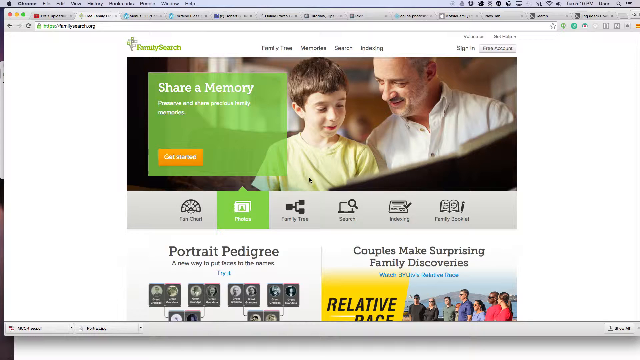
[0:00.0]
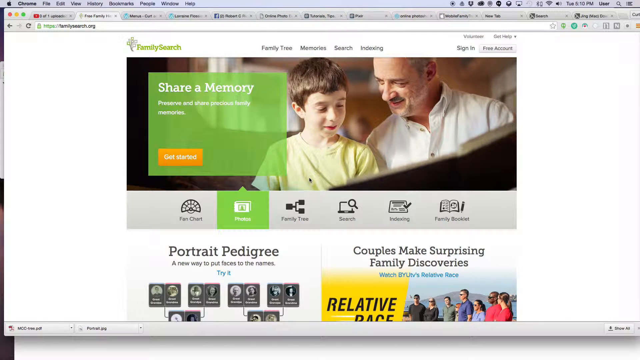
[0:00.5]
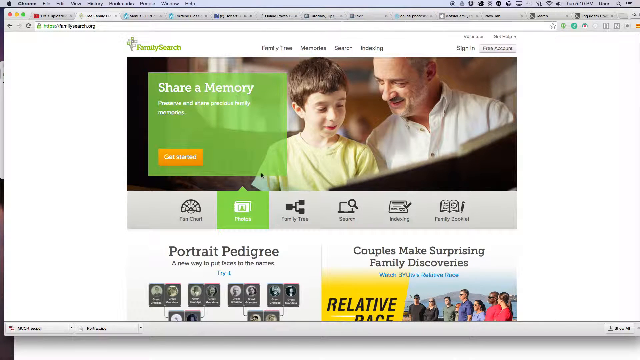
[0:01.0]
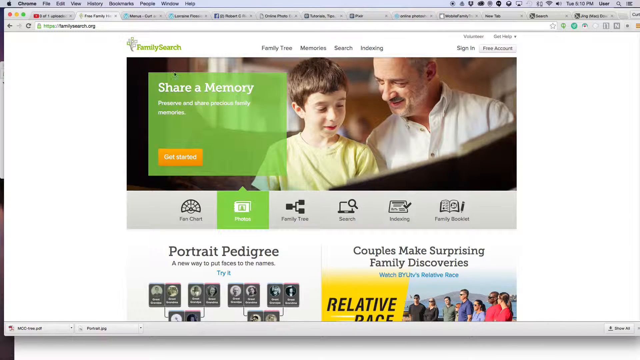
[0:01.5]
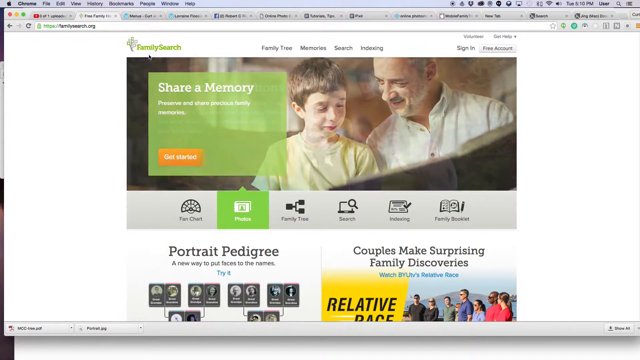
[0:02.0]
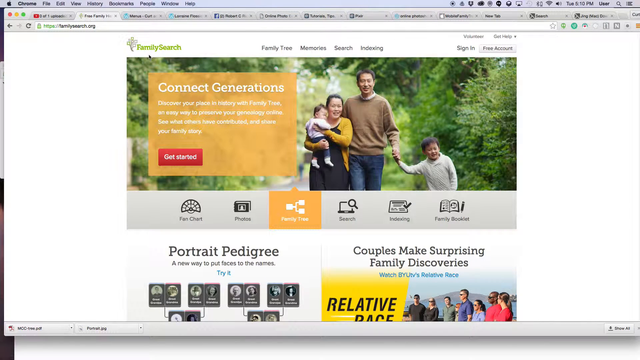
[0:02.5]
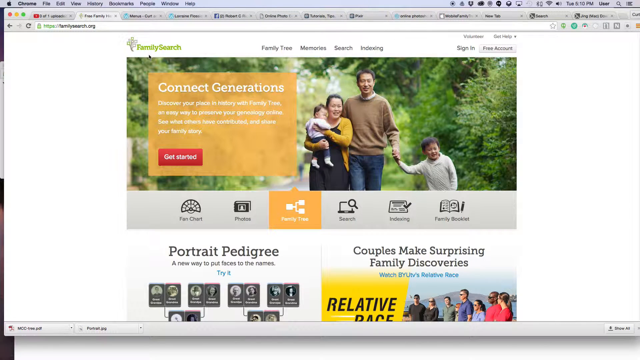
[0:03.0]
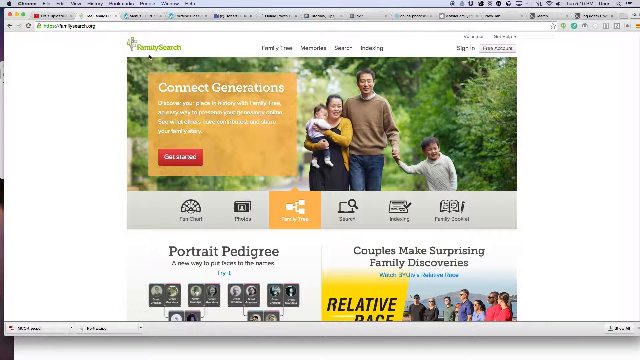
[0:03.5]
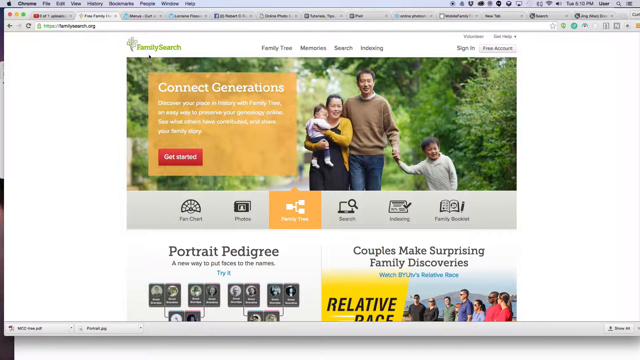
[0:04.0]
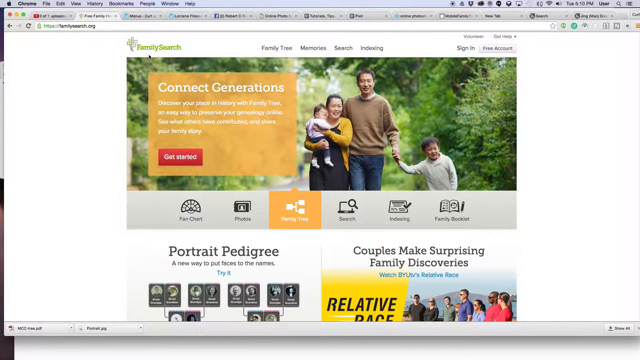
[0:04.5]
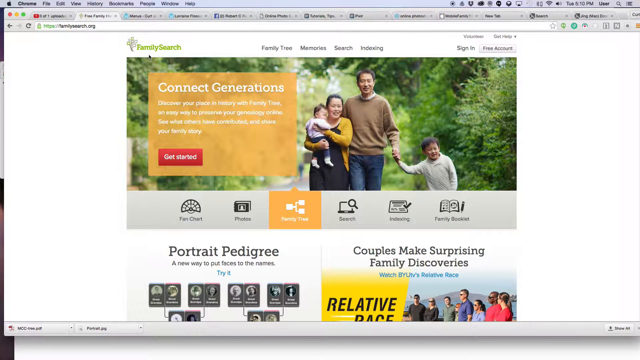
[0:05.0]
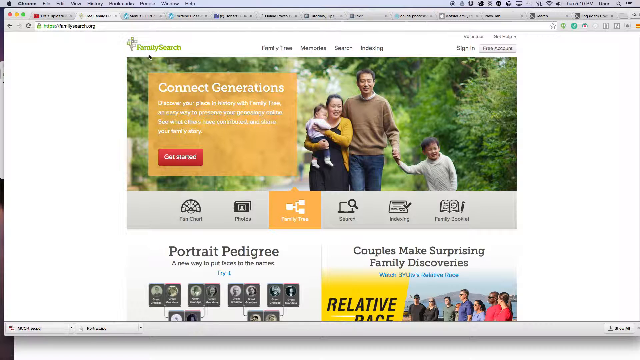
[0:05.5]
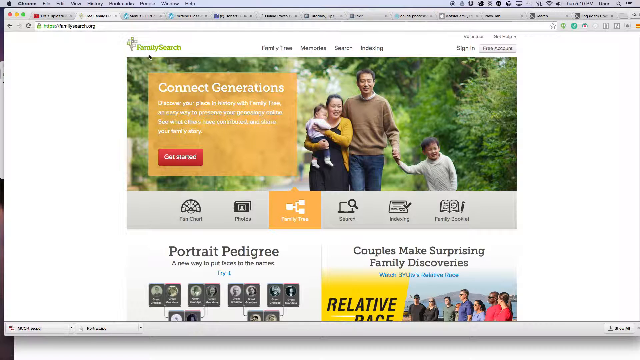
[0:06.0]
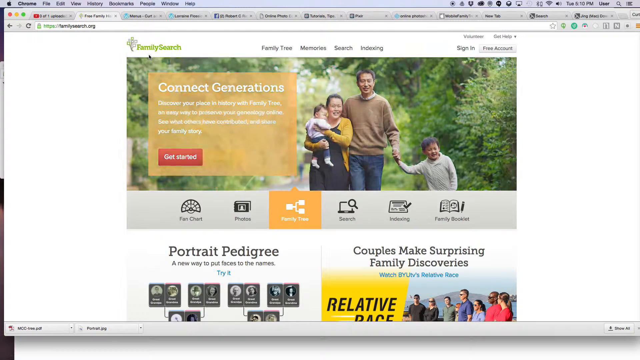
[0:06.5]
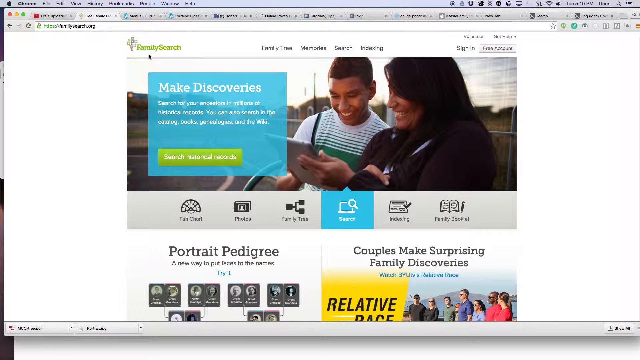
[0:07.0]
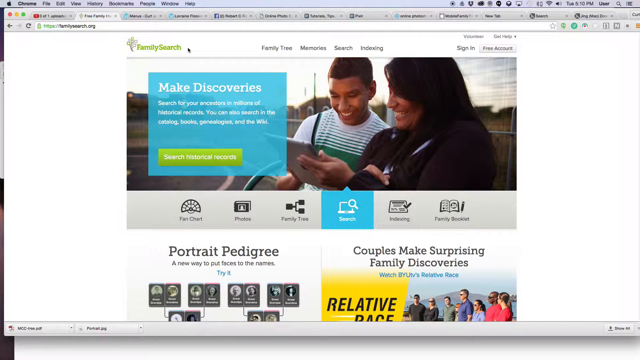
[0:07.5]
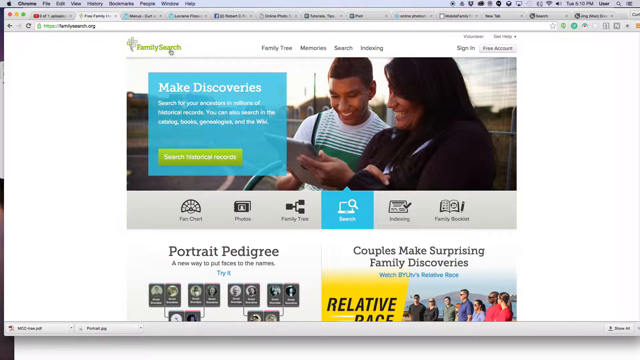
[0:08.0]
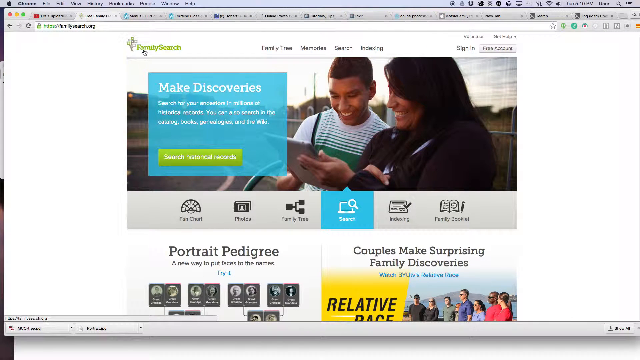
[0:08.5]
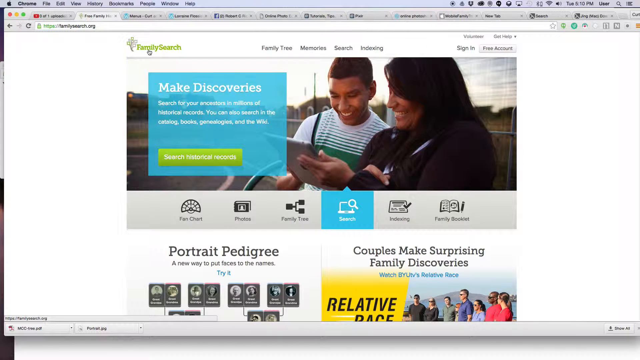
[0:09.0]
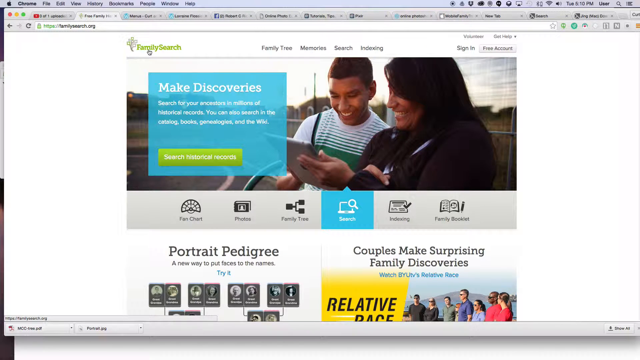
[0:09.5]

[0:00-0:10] A website is displayed with the Apple logo in the very top left corner, apparently a Mac browser. Just below it is the URL, showing the website familysearch.org, possibly for an advertisement video about searching for family history. The front page shows the website name, familysearch.org, along with a little tree representing an ancestral family tree. A picture shows a dad looking to the left and sort of smiling while his kid, on the left, sort of looks down, seemingly trying to process his family tree. The rest of the website has various clickable items, some setup sections and sign-in options. The user's mouse hovers over the family search button.